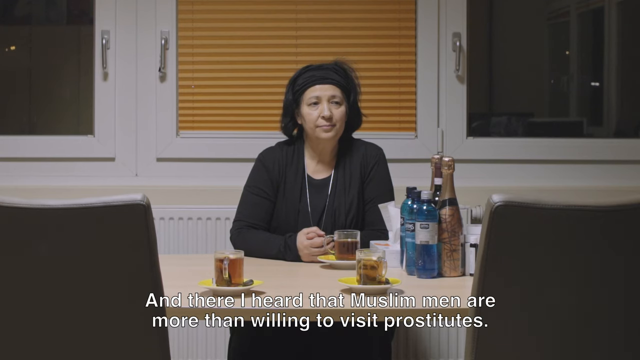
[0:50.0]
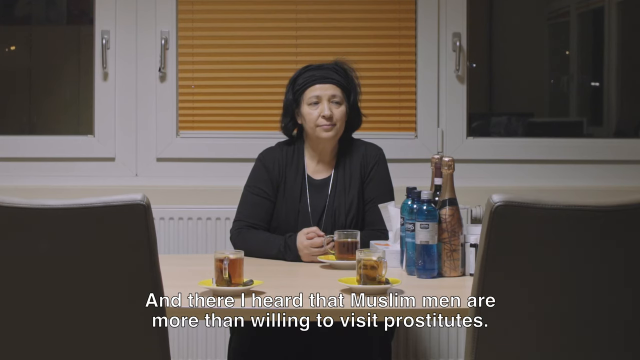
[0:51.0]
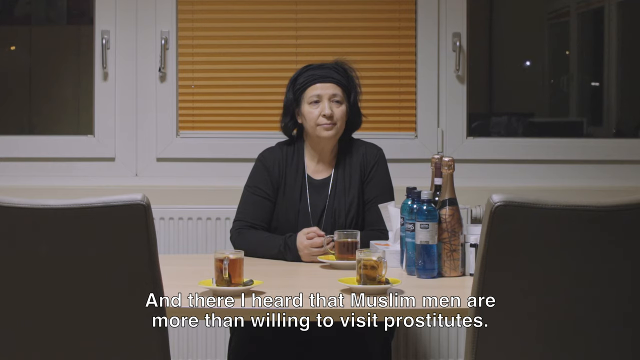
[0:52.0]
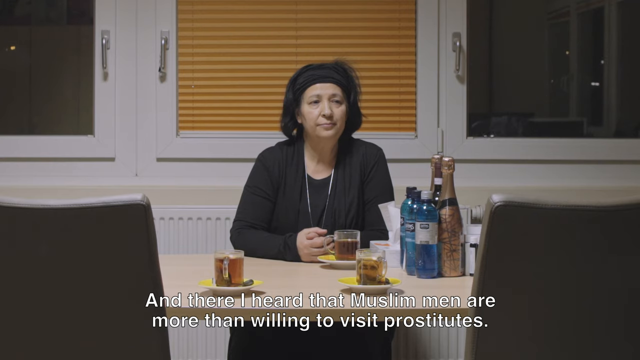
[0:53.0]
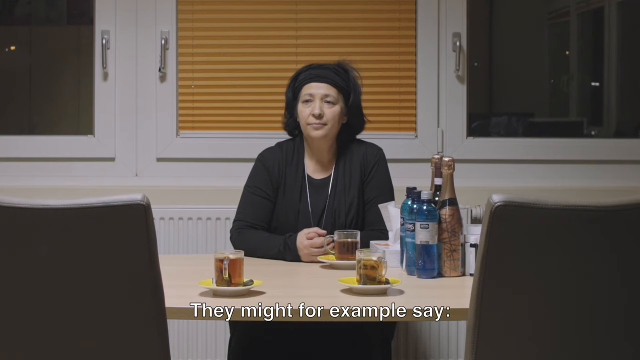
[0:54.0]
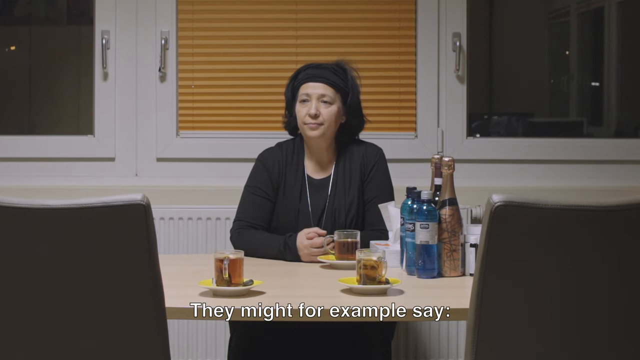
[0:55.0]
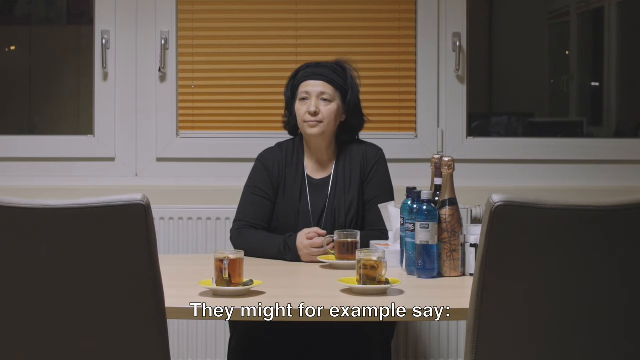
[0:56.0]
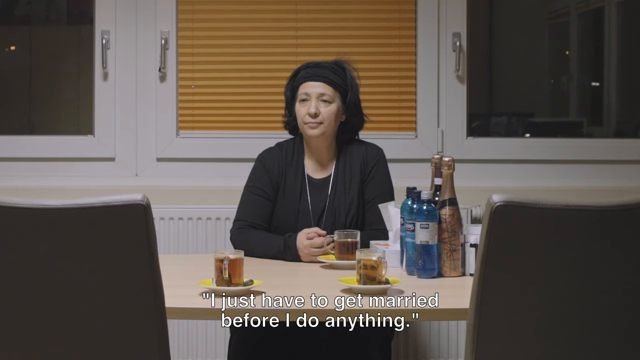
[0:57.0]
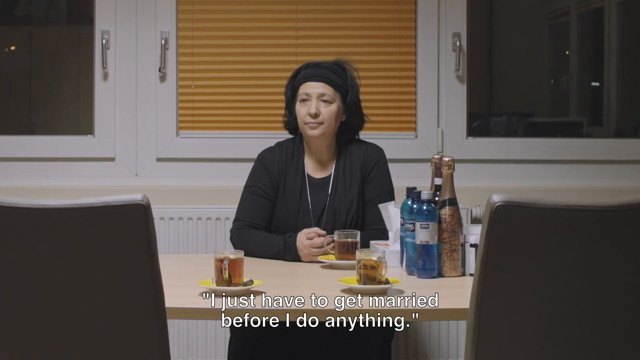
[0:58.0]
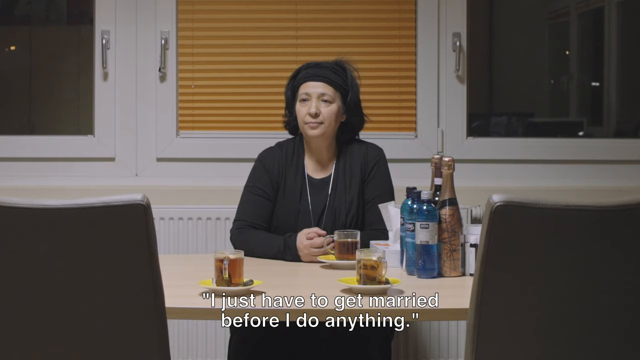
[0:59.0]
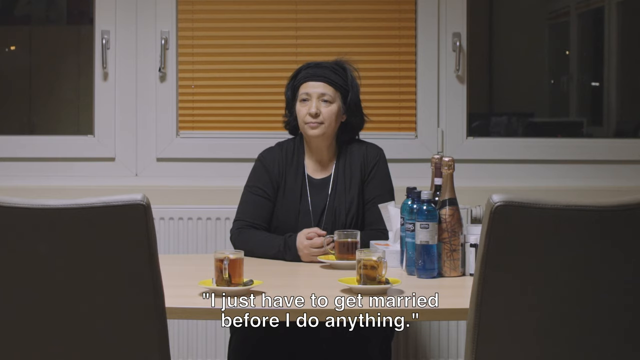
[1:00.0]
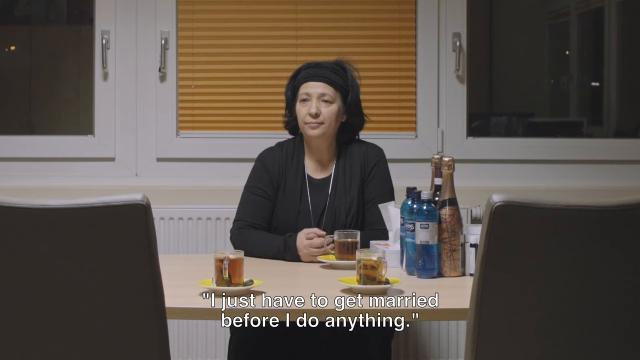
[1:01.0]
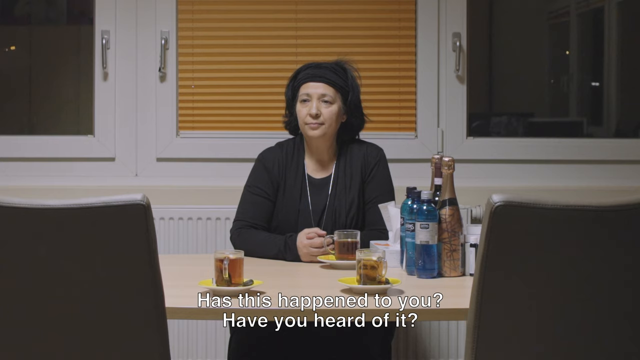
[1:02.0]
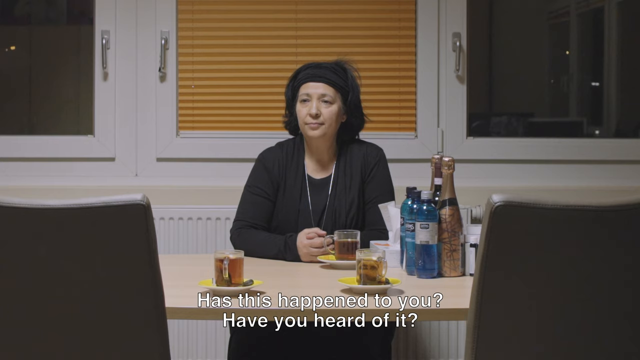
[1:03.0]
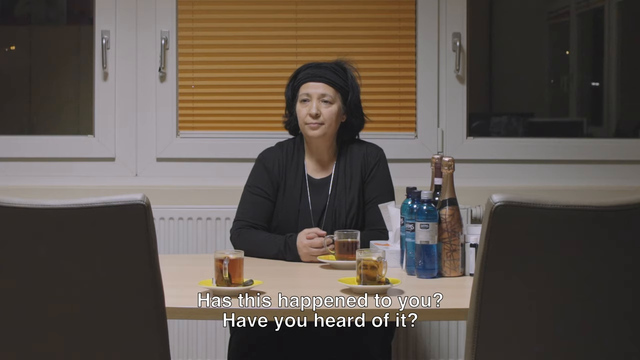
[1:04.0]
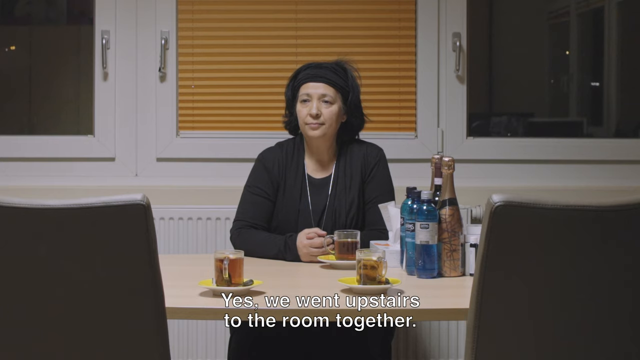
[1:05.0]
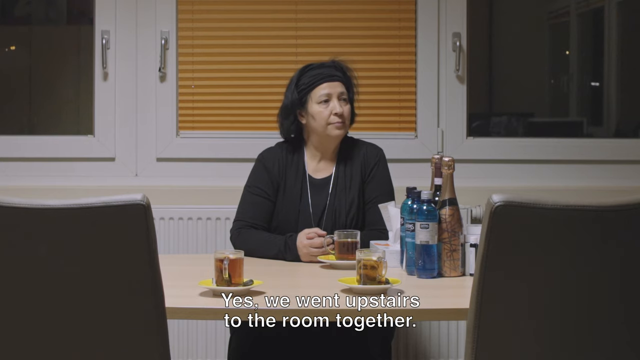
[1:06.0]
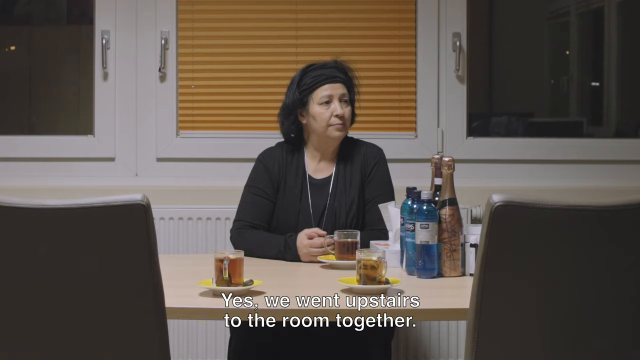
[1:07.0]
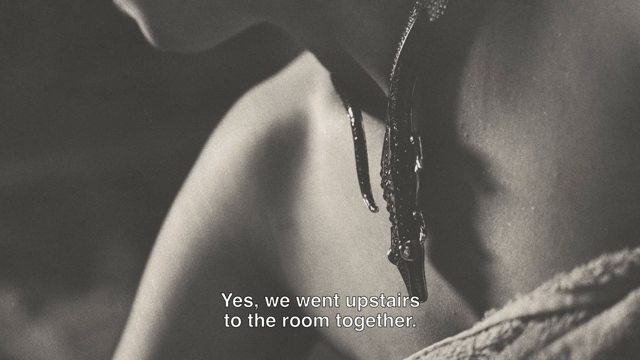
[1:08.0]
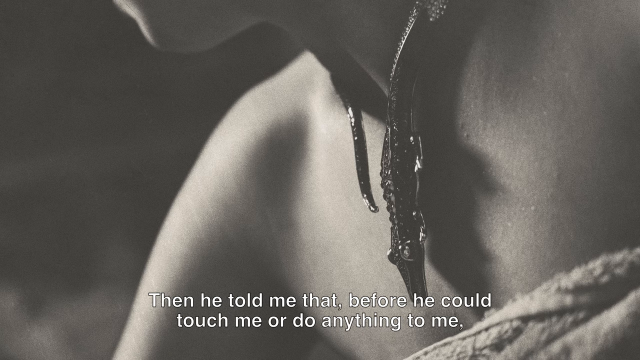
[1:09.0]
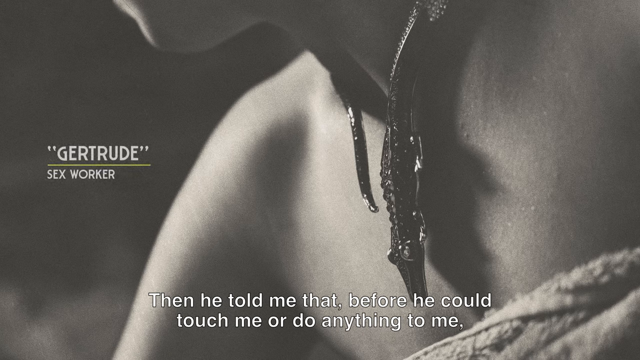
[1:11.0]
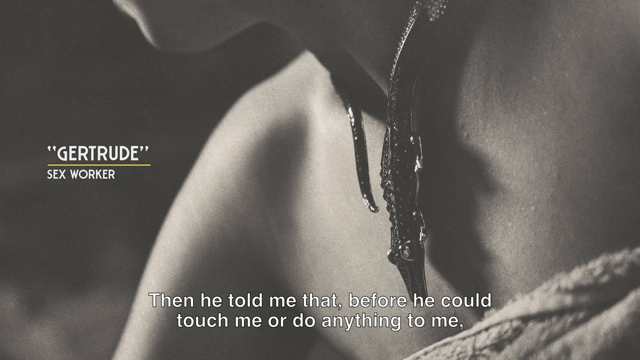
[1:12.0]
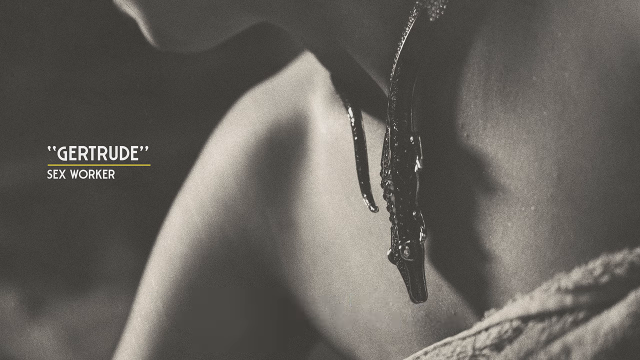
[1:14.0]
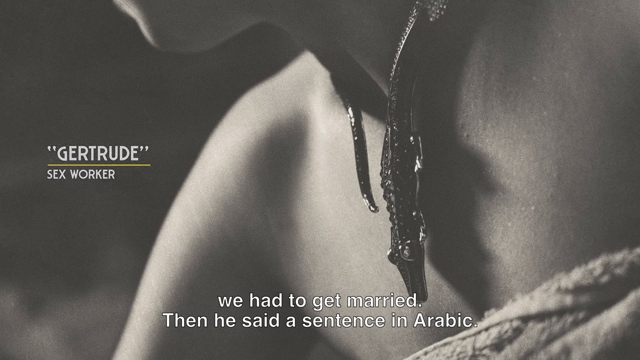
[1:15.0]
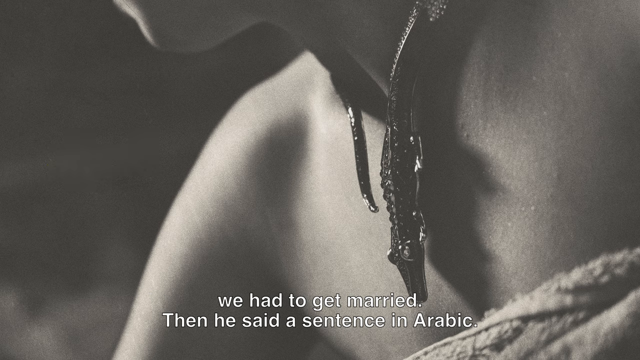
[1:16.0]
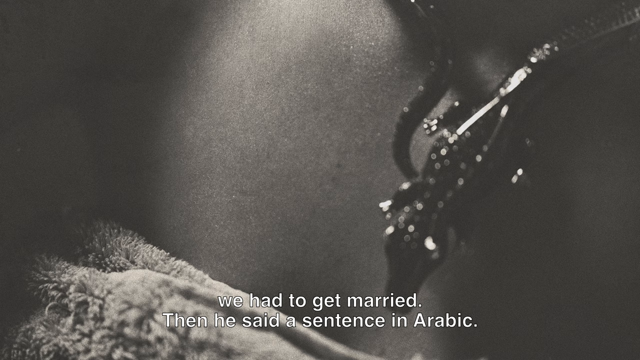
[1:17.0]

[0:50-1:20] The lady is again sitting at the dining table. Words move quickly across the bottom of the screen, apparently closed captions: something about Muslims, then "I just have to get married before I can do anything", "Has this happened to you? Have you heard of it?", "Yes, we went upstairs to the room together", "He then he told me that before he could touch me or do anything to me we had to get married and he said a sentence in Arabic", and "I had to repeat it." The words are white, slowly crawl on the screen and stay only about two seconds each. The scene stays mostly the same: she sits at the table with the drinks, a neutral look on her face, looking around. Then the shot cuts to a black-and-white still of another lady, apparently someone else. The name "Gertrude", in quotation marks, appears in the bottom left corner, with "sex worker" underneath. Her face cannot be seen; only her shoulder is visible, and she has a necklace on.